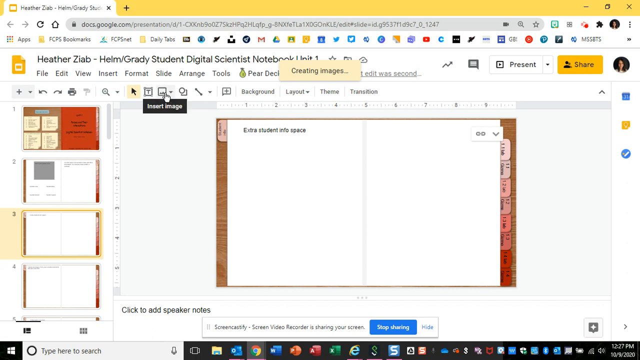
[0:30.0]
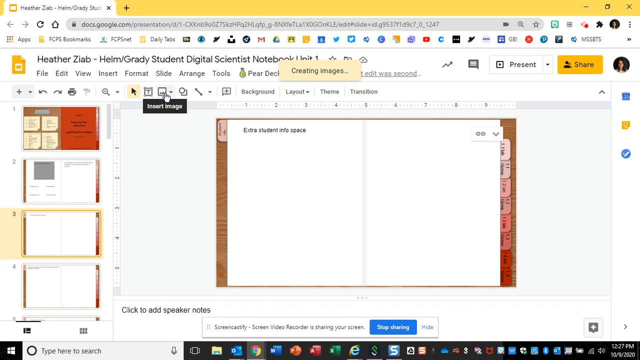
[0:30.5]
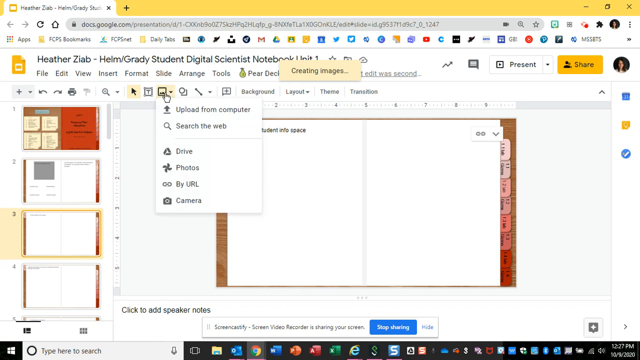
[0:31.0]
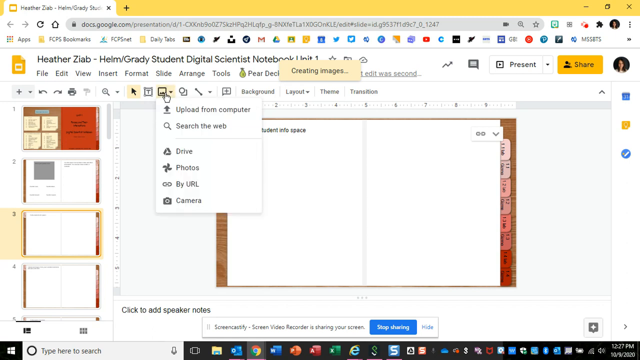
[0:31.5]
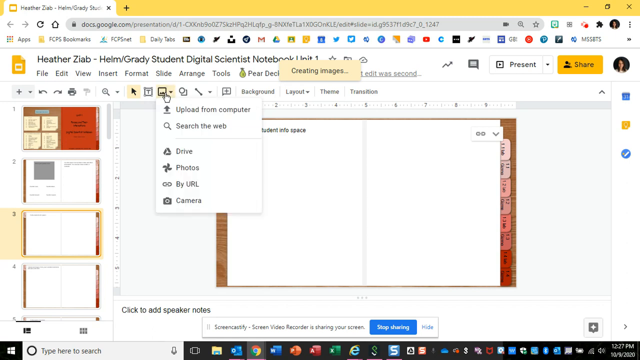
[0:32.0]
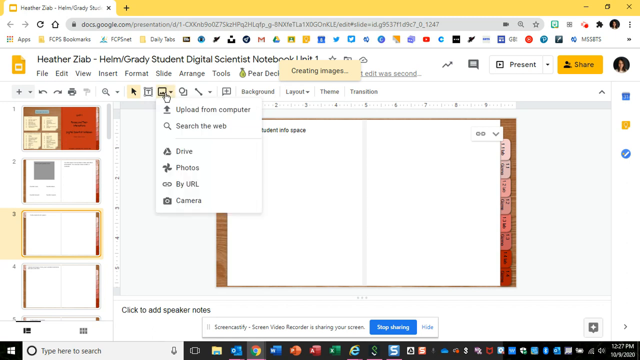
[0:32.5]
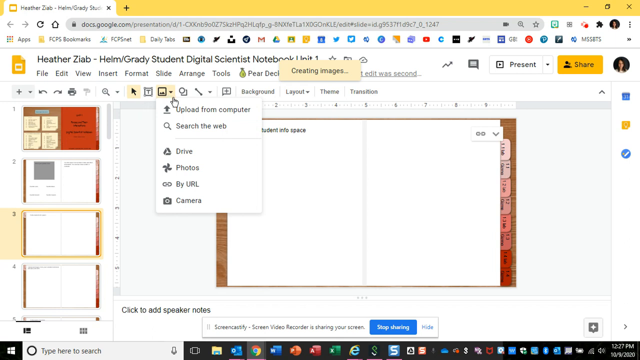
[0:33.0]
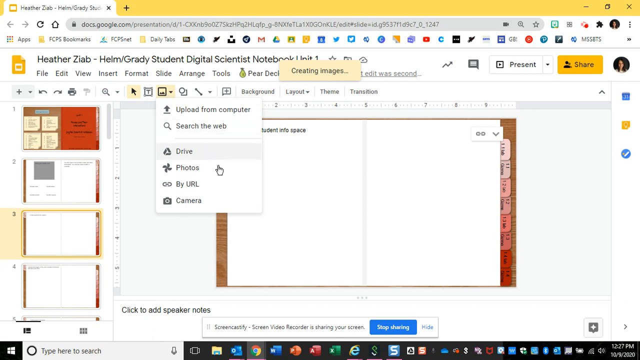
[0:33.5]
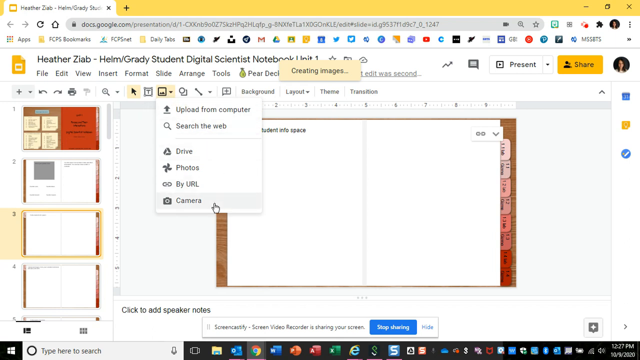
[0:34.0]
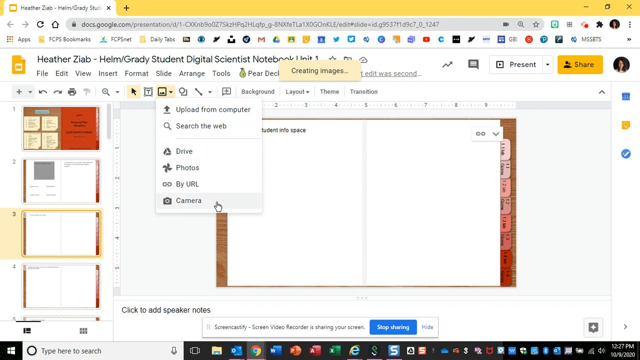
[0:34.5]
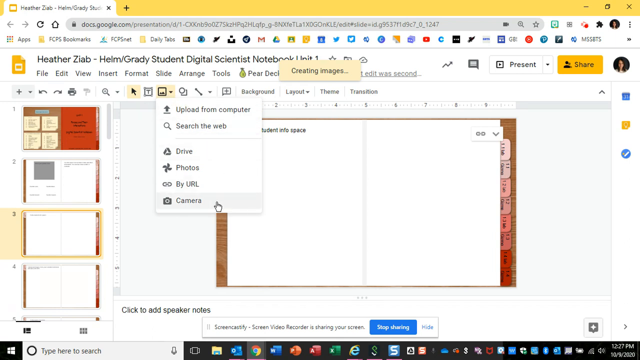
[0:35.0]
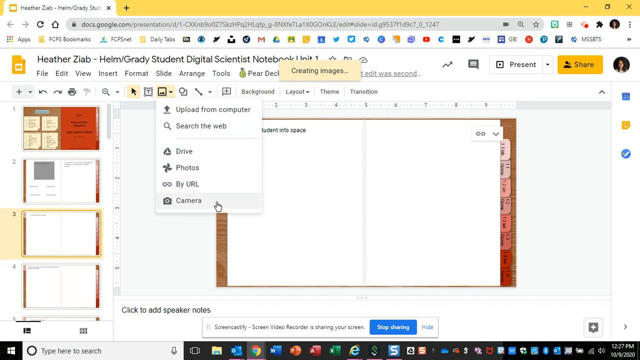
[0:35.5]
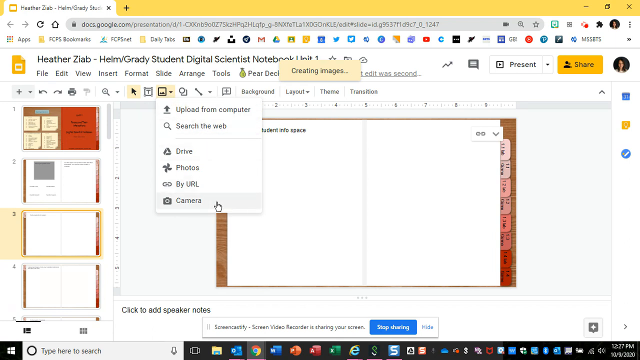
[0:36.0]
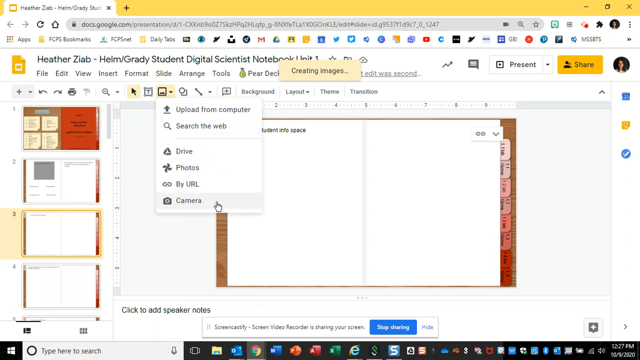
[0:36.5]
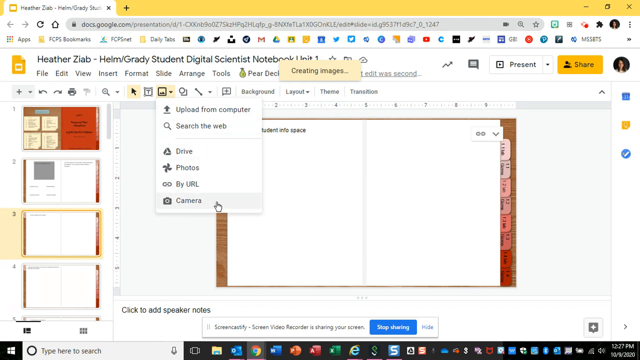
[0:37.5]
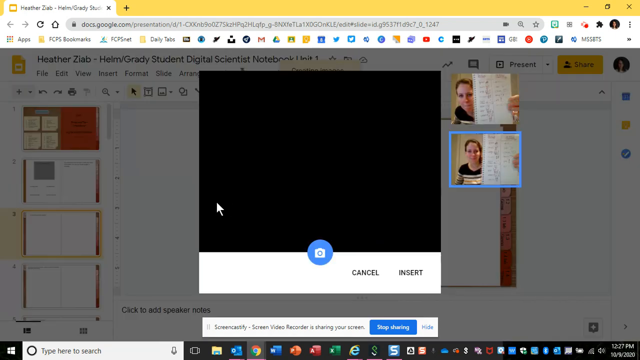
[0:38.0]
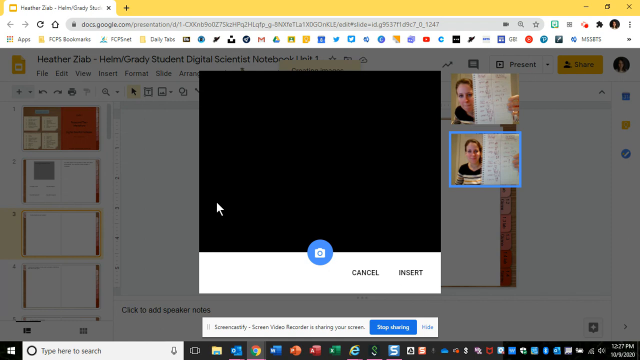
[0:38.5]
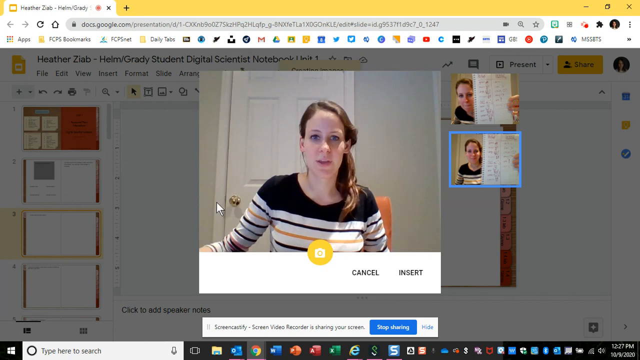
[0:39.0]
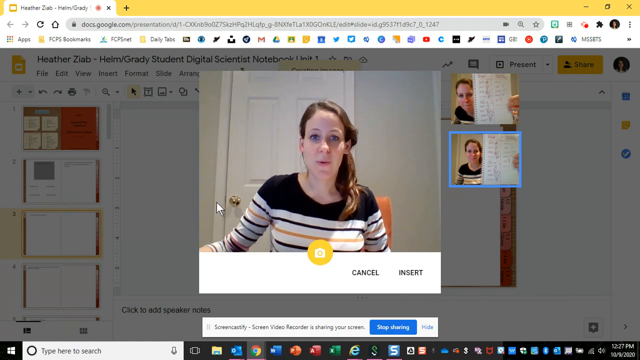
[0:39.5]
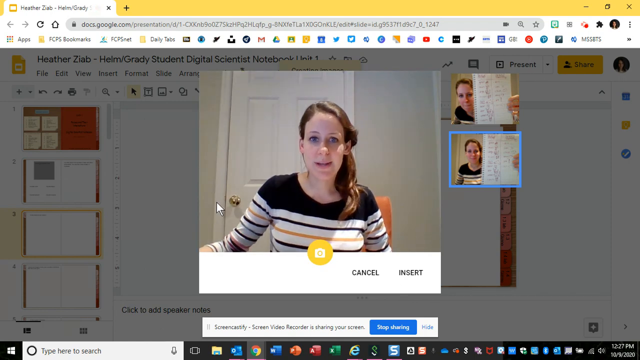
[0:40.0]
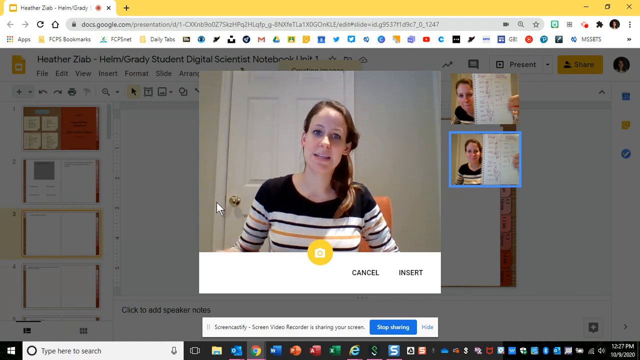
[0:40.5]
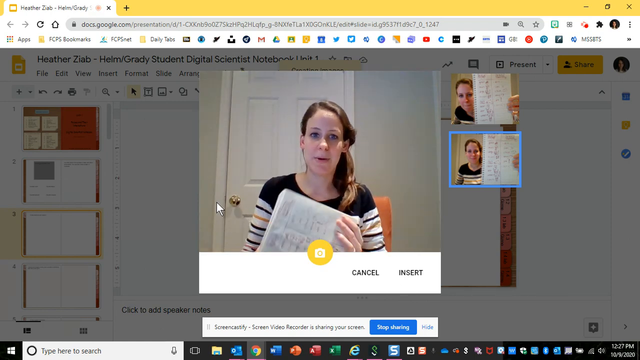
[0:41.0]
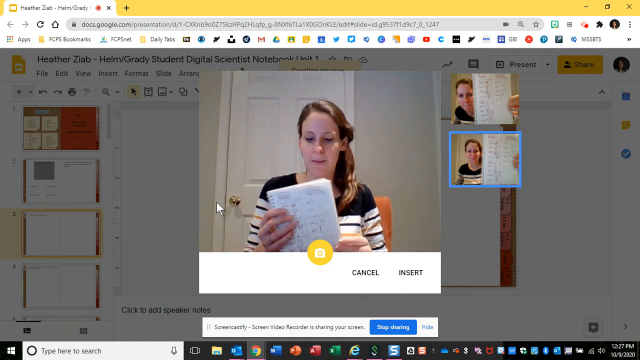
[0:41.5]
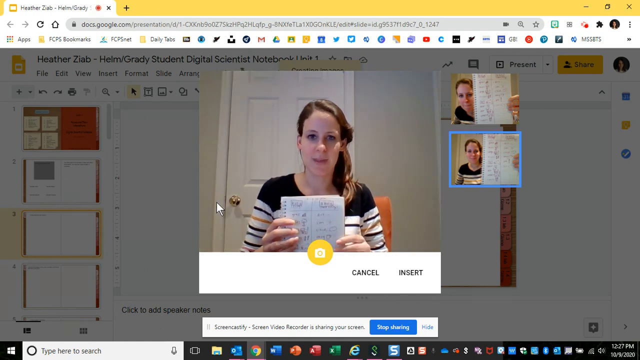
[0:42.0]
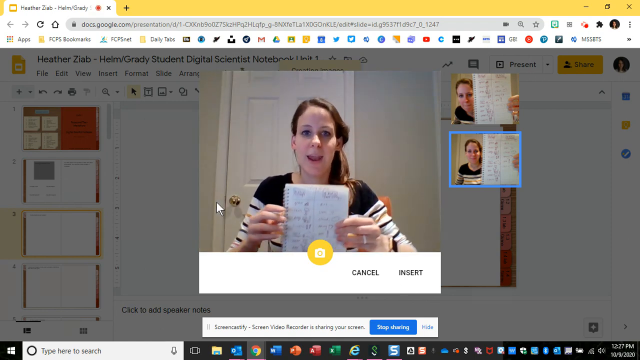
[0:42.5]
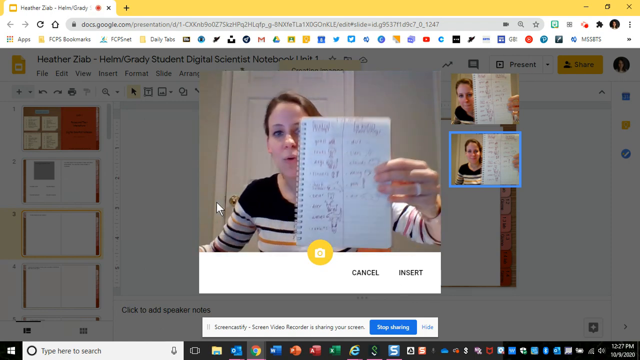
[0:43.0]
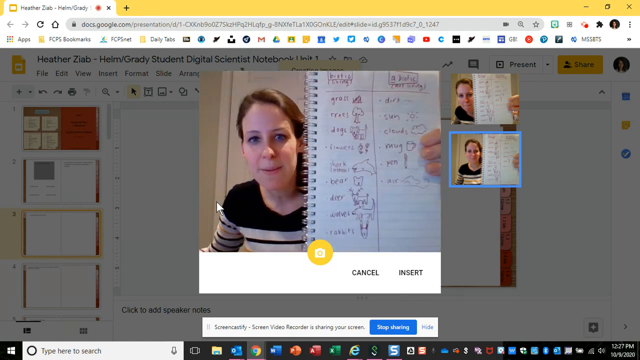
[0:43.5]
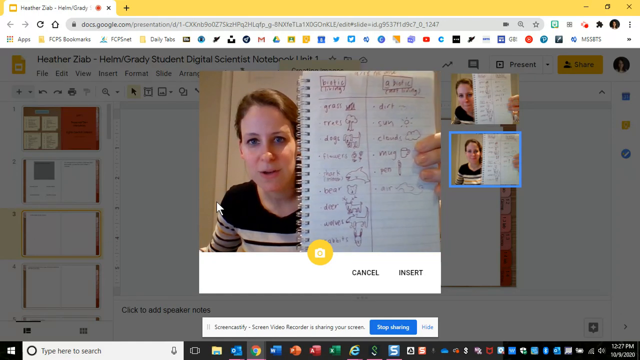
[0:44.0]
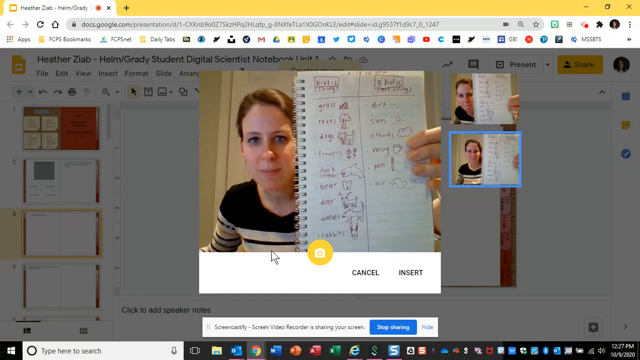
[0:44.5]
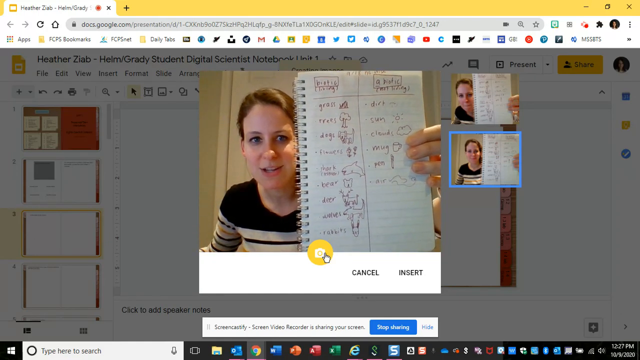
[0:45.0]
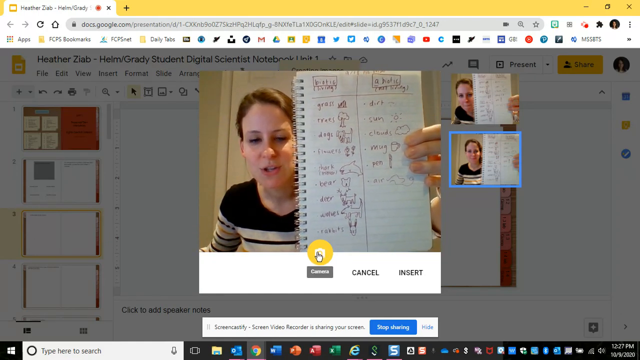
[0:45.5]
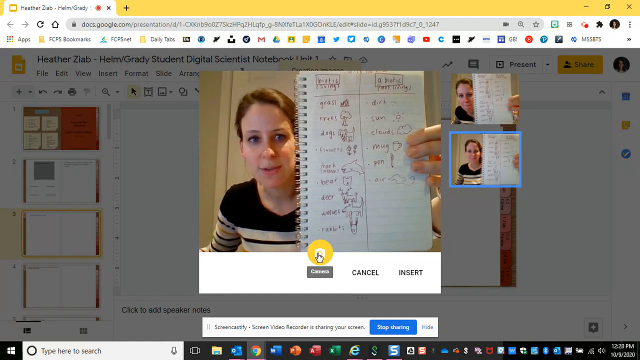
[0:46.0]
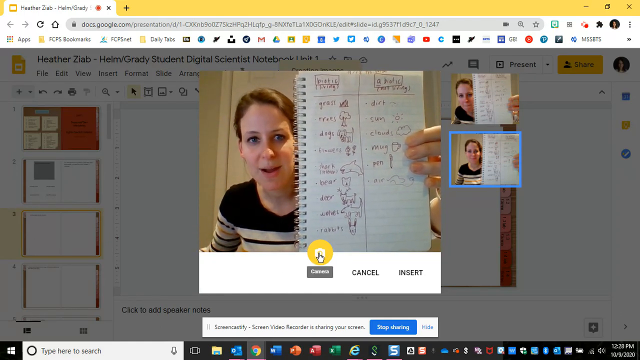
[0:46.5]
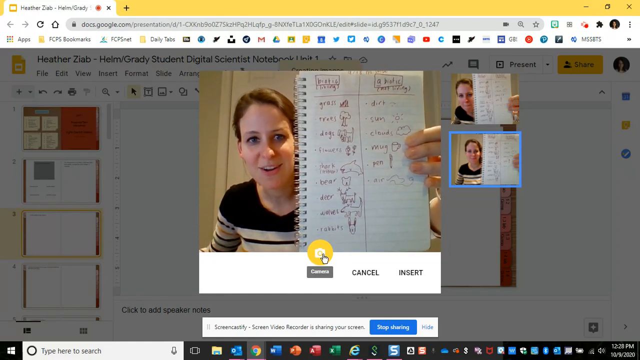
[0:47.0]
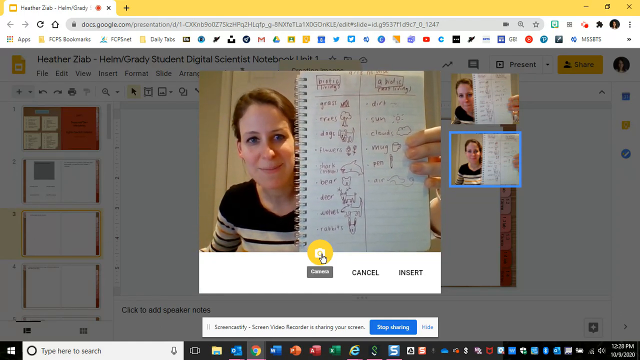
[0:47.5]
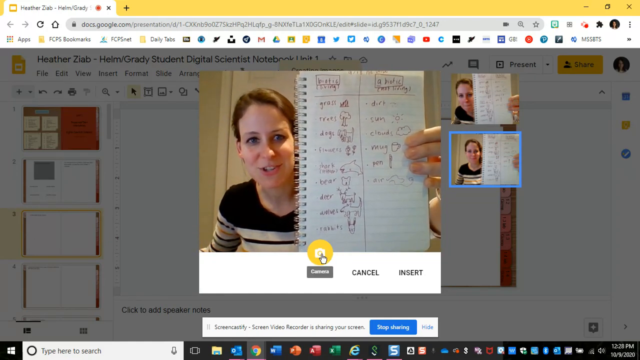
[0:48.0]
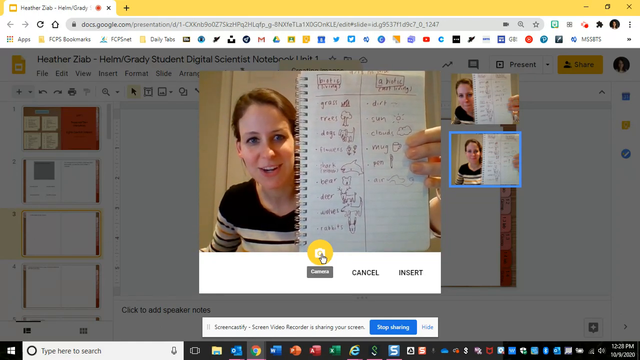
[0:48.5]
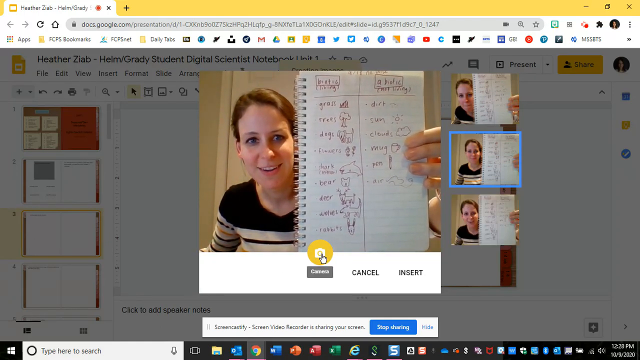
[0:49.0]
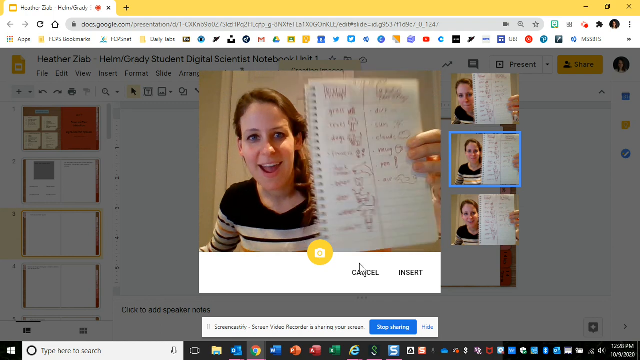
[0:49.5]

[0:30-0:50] After the user clicks the insert icon on the menu ribbon, a window pops up listing options including upload from computer and search the web, with camera at the bottom. The user clicks camera, and a camera view appears showing her face. She is an adult wearing a long-sleeve blouse with black, white and yellow stripes. The camera window has cancel and insert options and a yellow camera button in the middle. She talks, apparently recording, and shows a notebook in her hand covered with sketches arranged in two columns: a word and a sketch of that word. For grass she drew grass, for trees a tree, and for dogs the same. She holds the notebook in front of the camera, then clicks the camera button and it takes a picture of her.